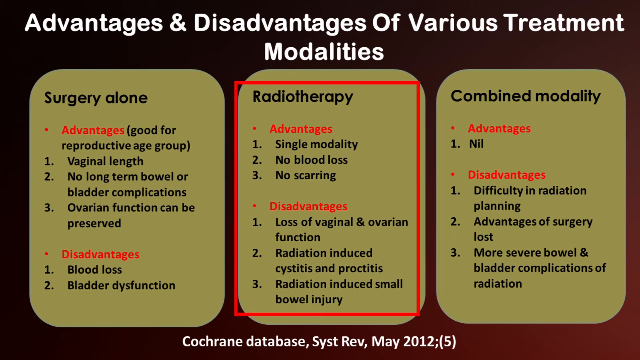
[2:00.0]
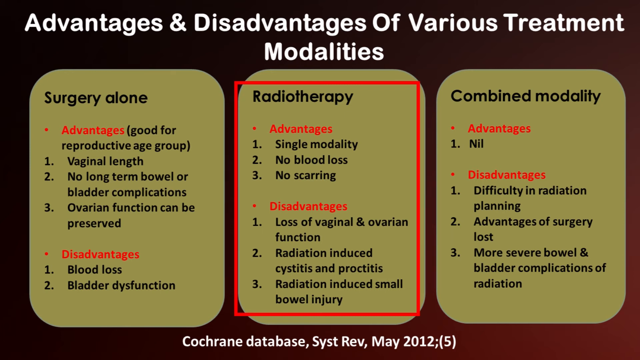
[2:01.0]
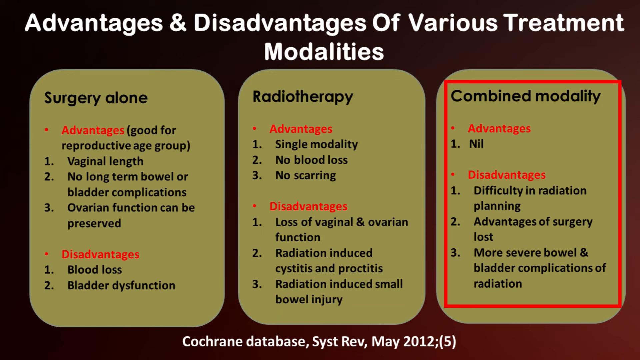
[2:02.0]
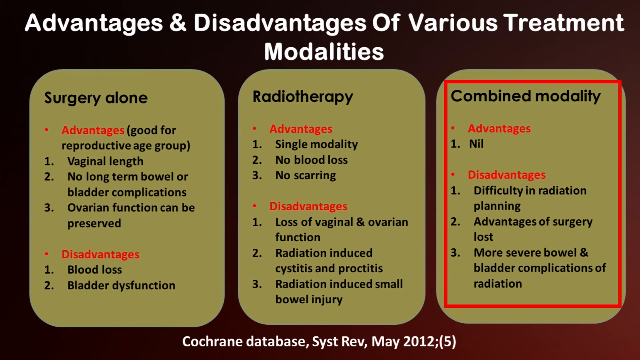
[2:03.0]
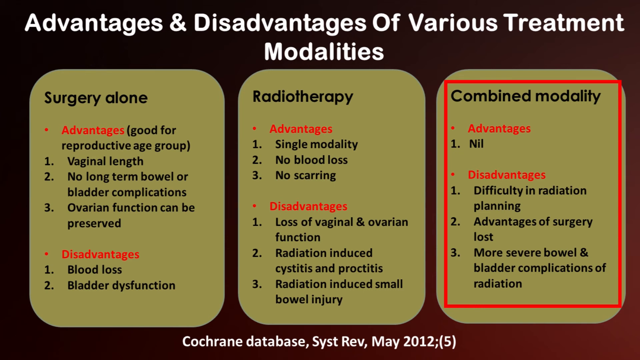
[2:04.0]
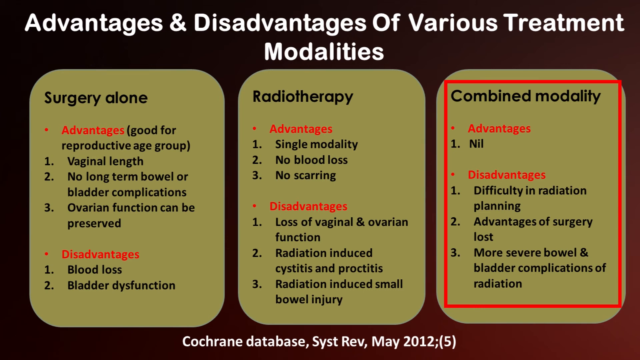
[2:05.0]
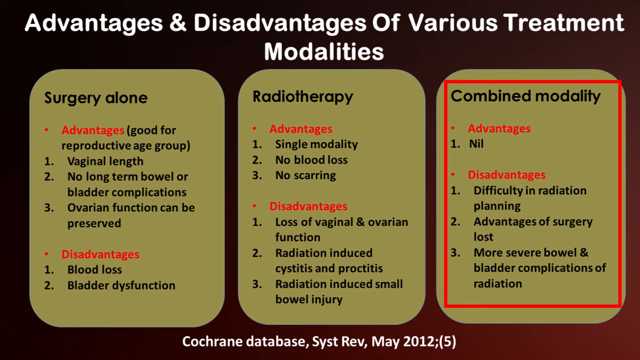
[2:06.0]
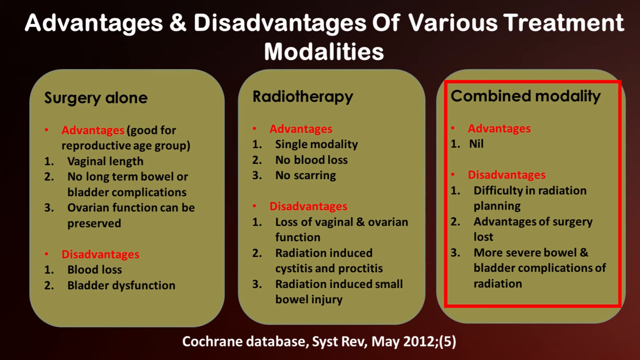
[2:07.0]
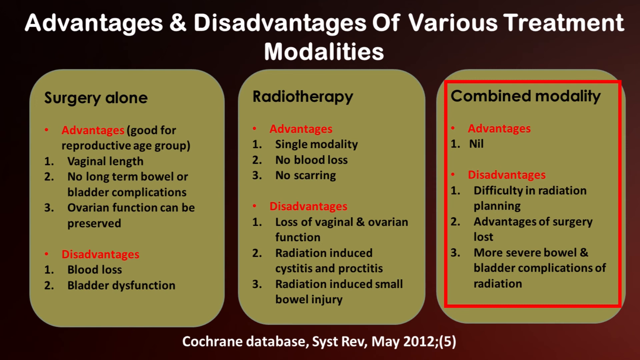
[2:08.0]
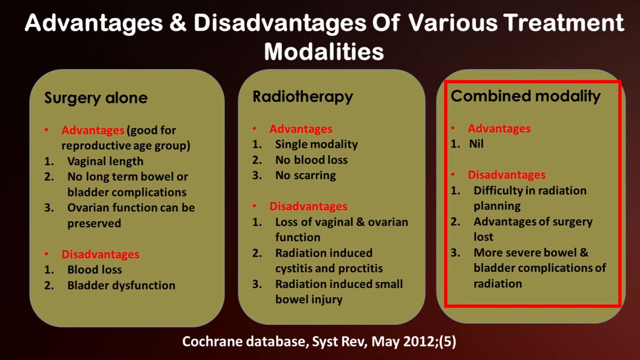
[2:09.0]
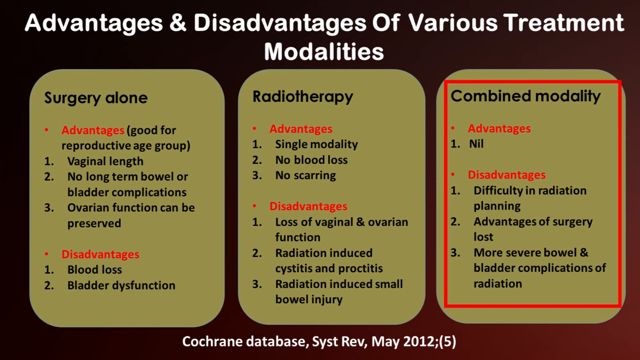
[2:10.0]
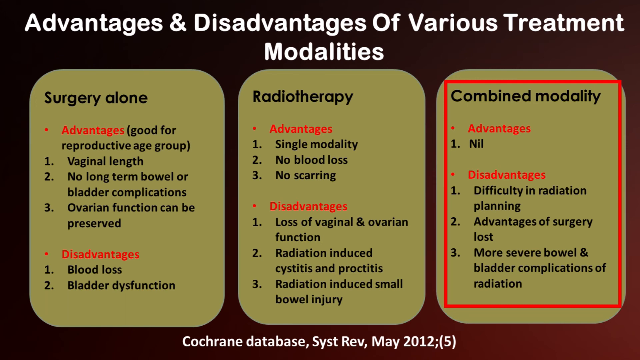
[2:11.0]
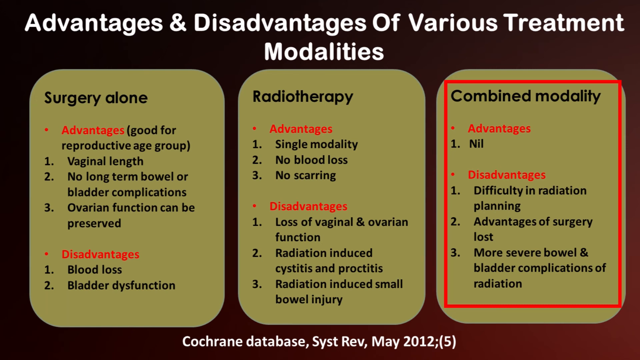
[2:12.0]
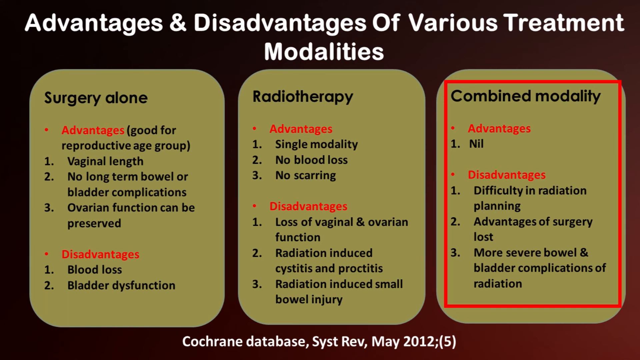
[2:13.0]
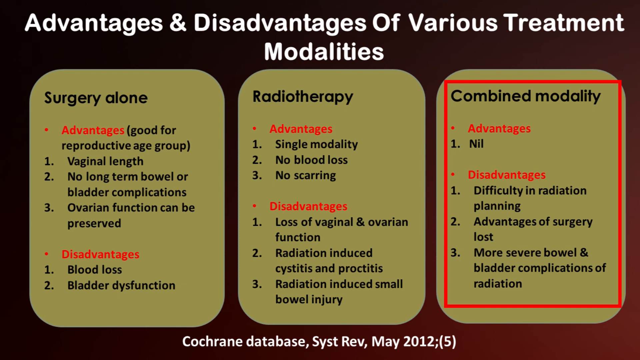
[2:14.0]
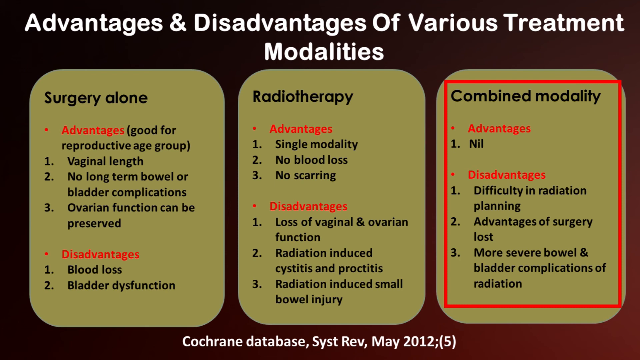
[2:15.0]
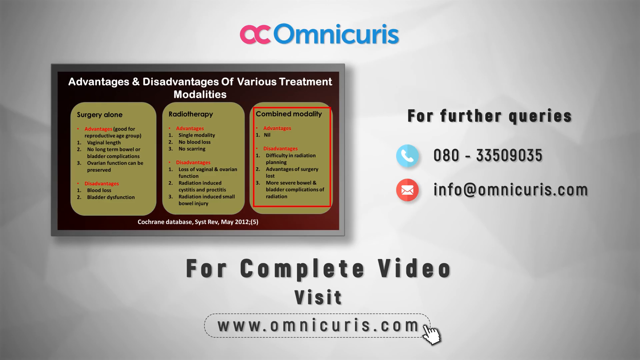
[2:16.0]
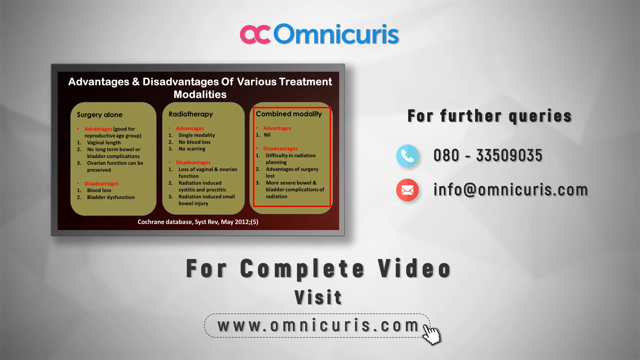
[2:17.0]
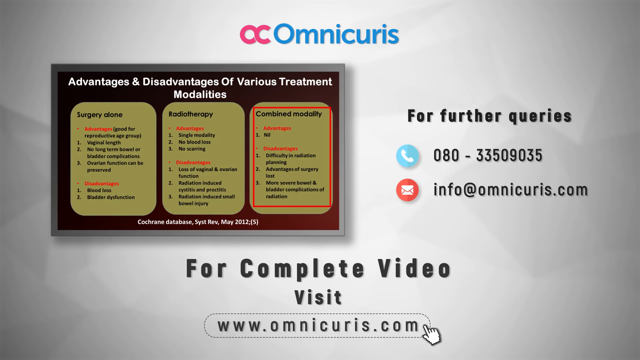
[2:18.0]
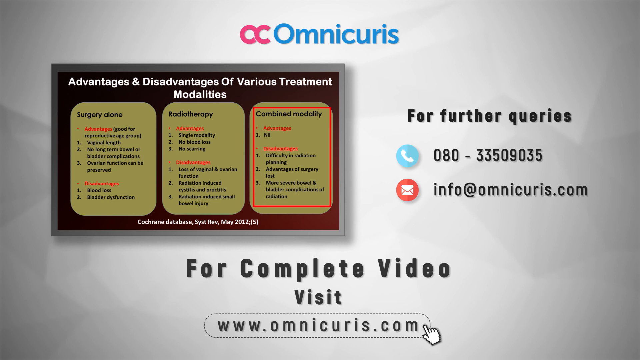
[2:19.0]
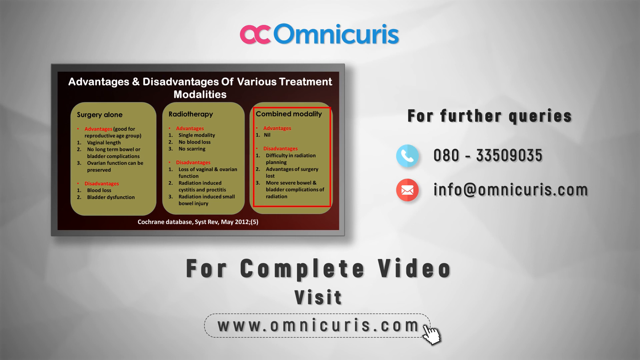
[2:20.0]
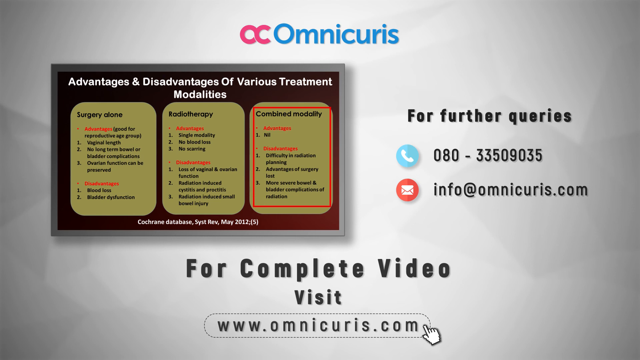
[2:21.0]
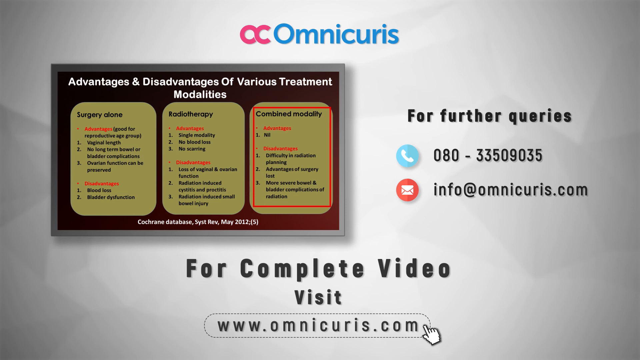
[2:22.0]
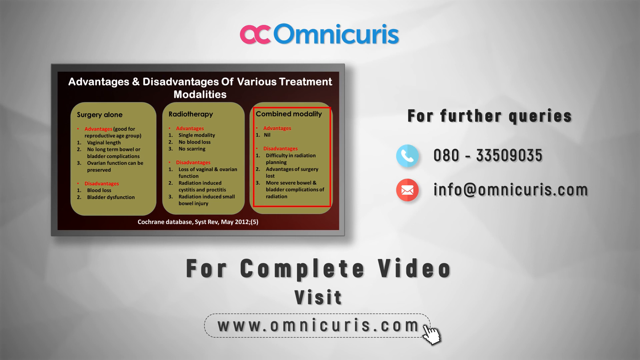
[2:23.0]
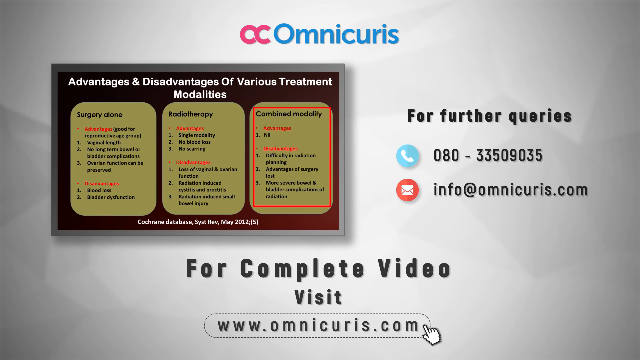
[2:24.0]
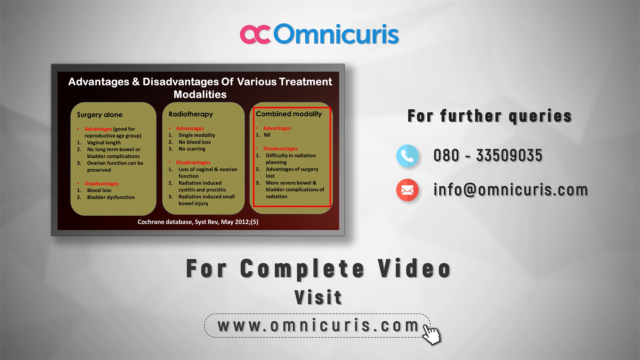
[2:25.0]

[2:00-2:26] A red square box is highlighted on the right-hand side as the advantages and disadvantages of the various treatments continue, covering surgery and radiotherapy. At the bottom, text shows the information was sourced from the Cochrane database, apparently in May 2012. The video then goes to a screen about watching the rest of the video, giving a phone number and an email, and showing a pop-up window of what the video looks like: the black box with the yellow tabs, the black text and some of the red highlighted areas. It says "for a complete video" and gives a website on a gray background. The organization appears to be Omni Curris.